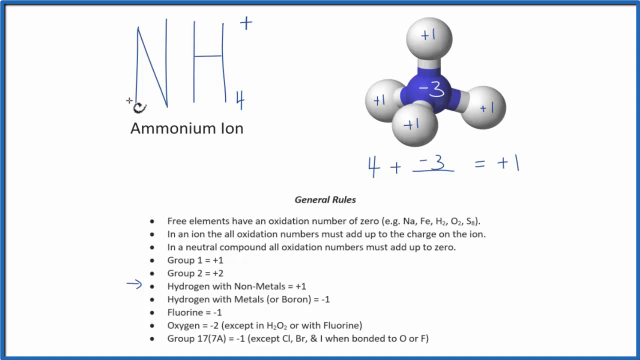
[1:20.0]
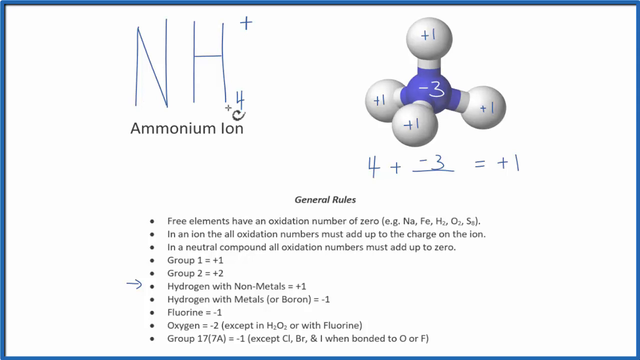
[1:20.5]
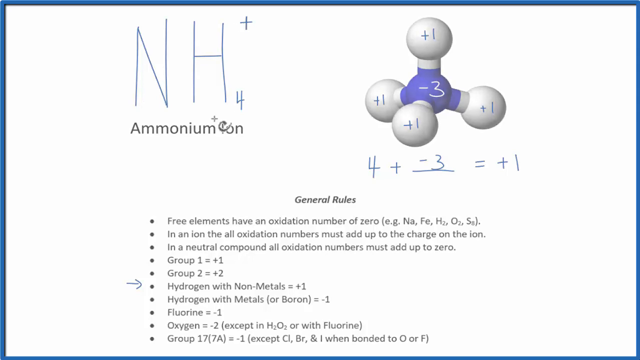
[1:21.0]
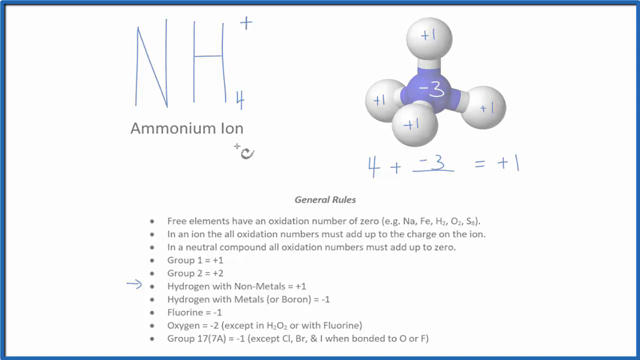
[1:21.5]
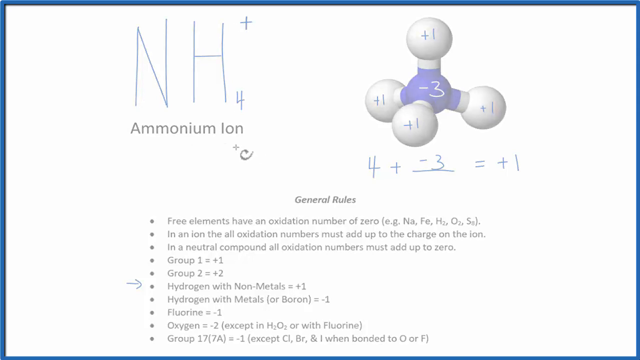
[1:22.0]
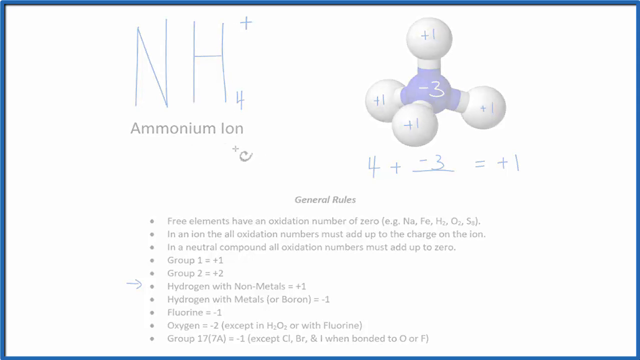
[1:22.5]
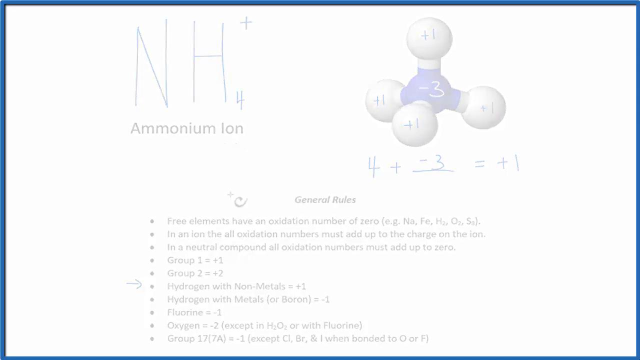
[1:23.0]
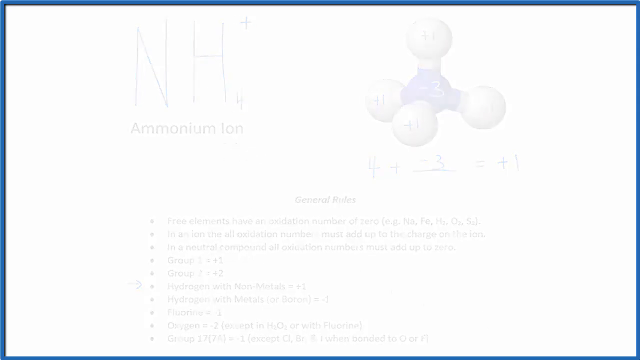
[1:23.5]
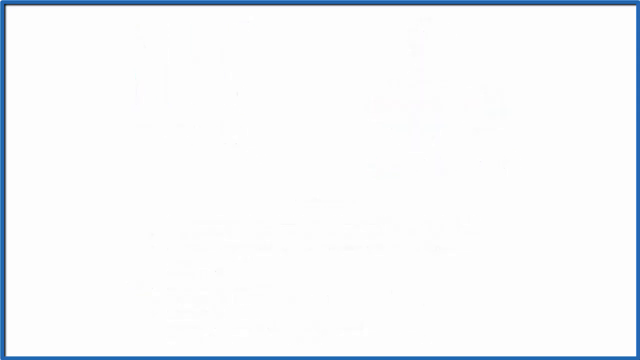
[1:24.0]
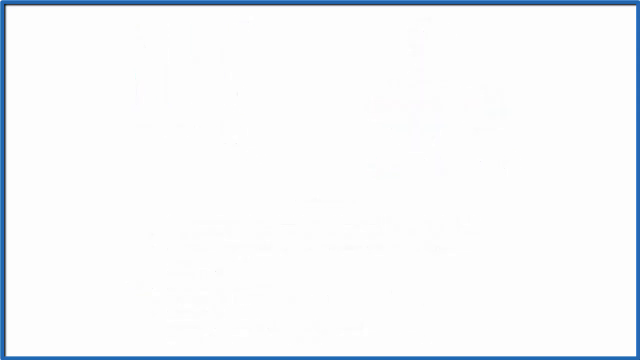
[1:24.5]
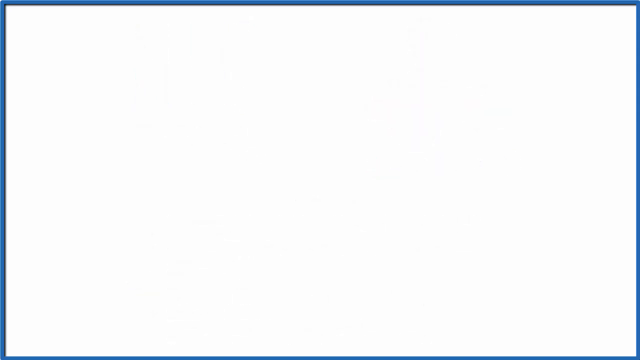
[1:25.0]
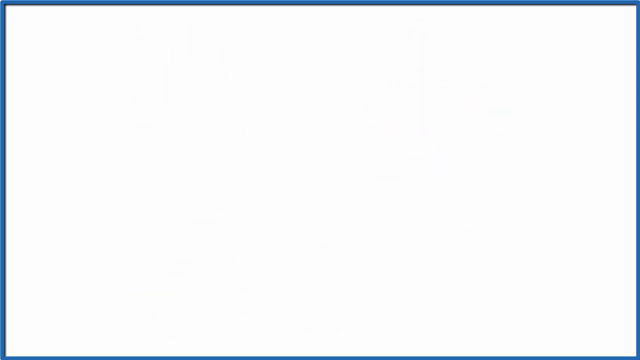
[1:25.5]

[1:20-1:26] The same slide is shown, and then it disappears, leaving only a blank space across the whole screen. The video appears to be a short teaching video for chemistry students about the ammonium ion.